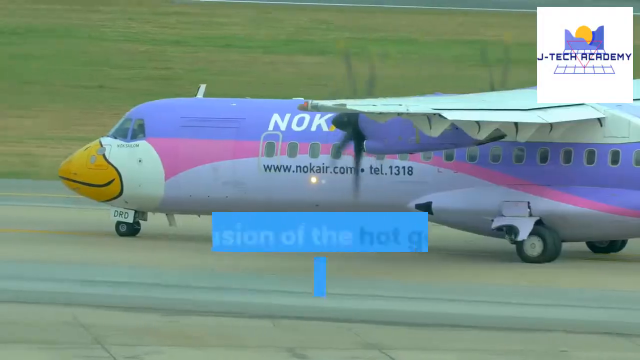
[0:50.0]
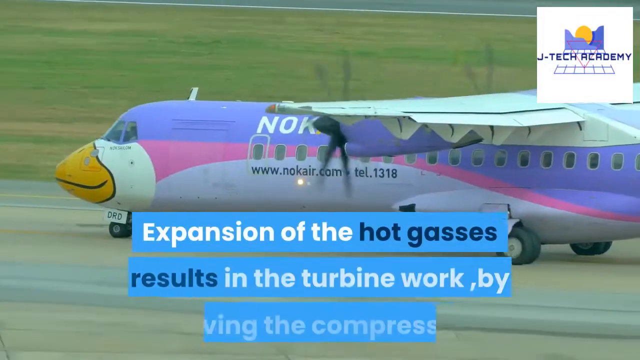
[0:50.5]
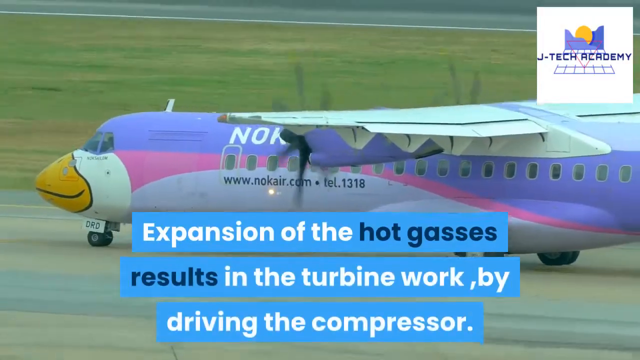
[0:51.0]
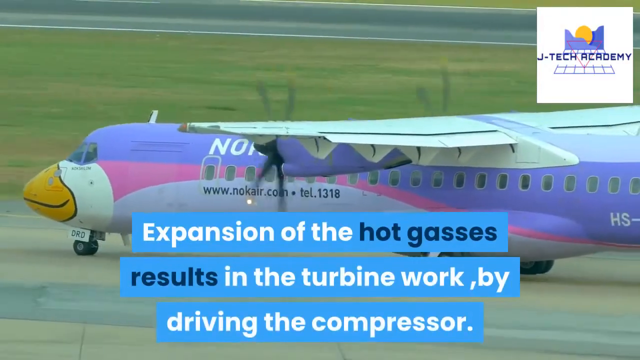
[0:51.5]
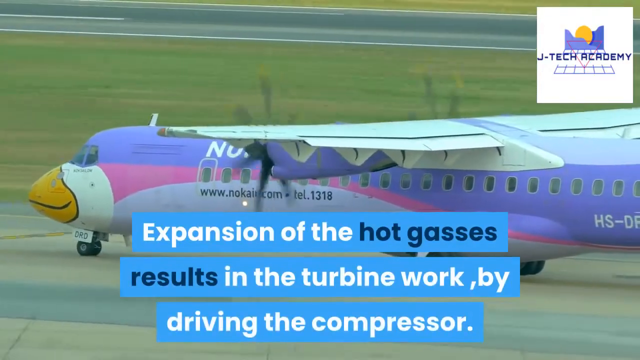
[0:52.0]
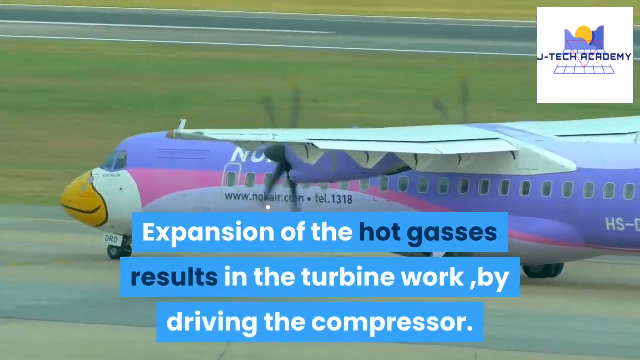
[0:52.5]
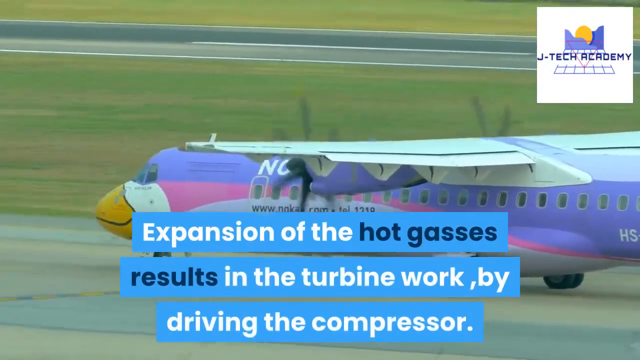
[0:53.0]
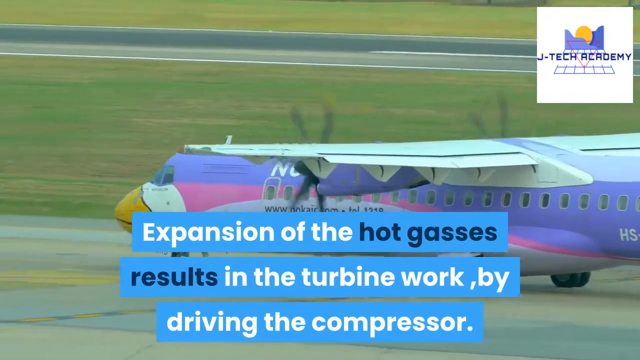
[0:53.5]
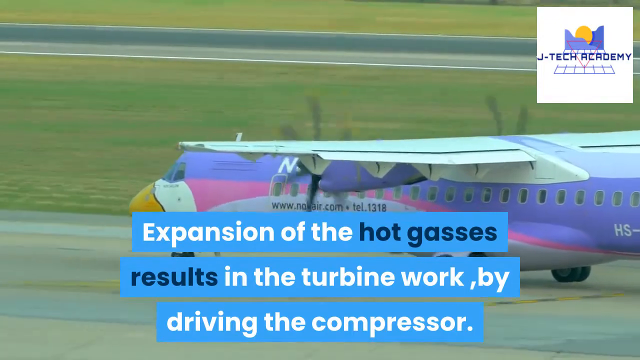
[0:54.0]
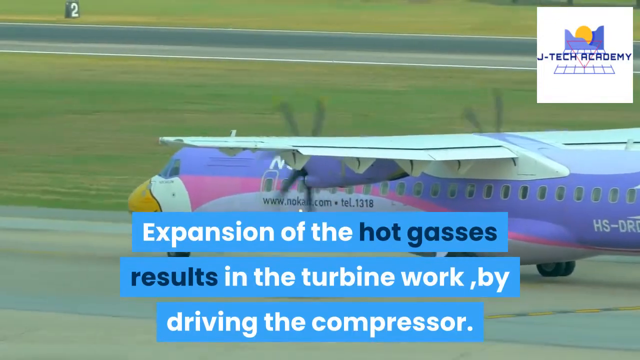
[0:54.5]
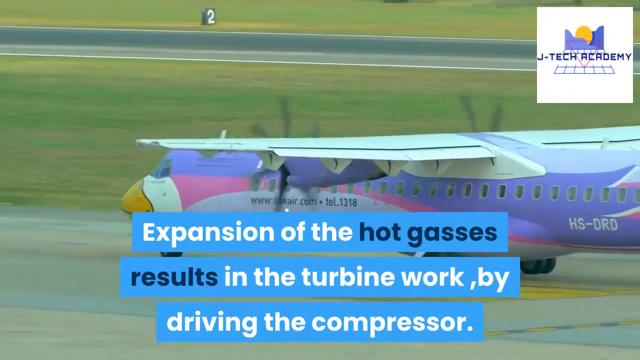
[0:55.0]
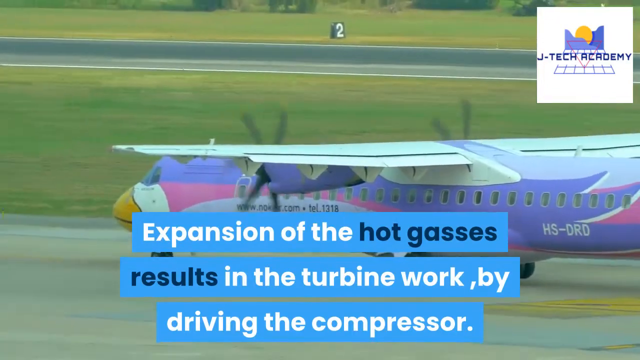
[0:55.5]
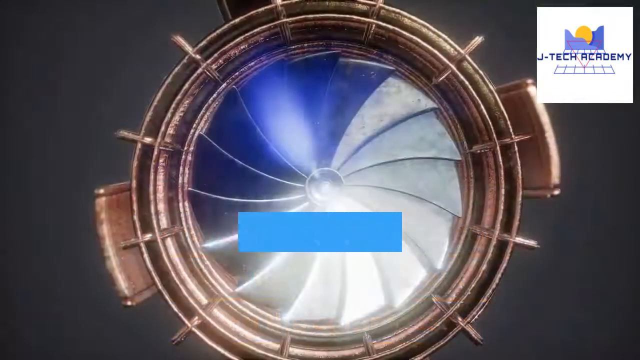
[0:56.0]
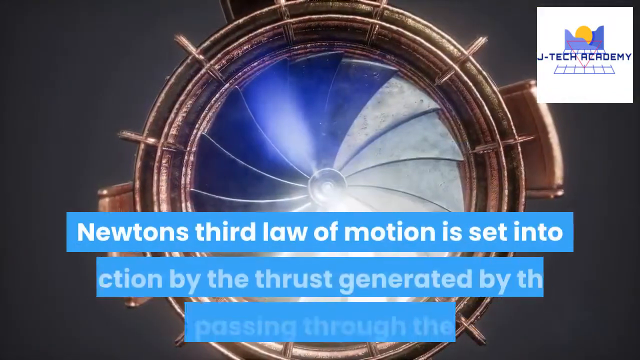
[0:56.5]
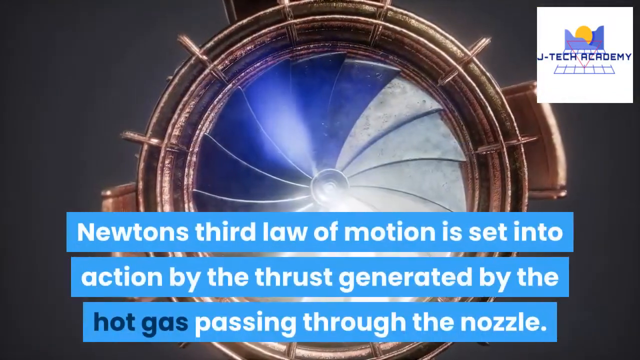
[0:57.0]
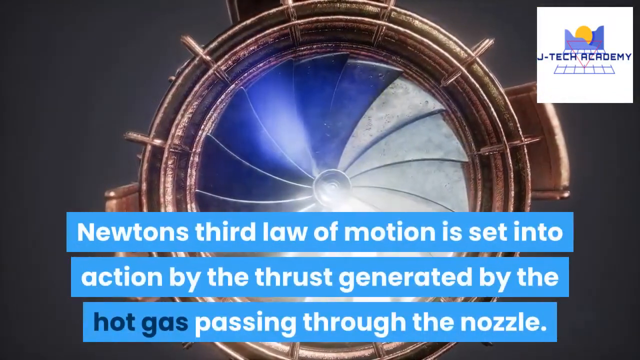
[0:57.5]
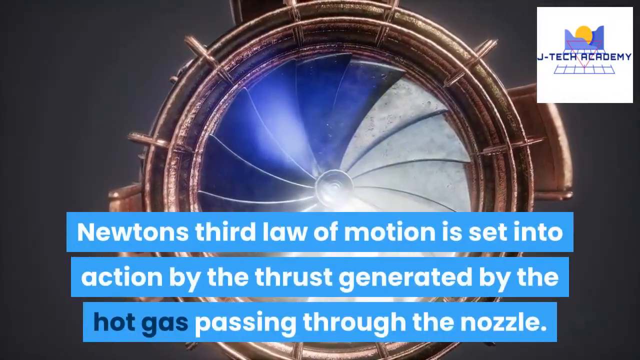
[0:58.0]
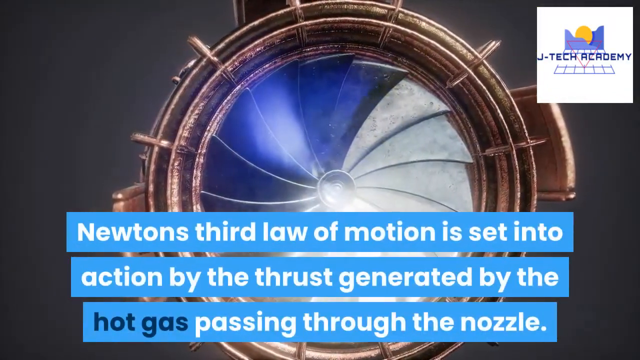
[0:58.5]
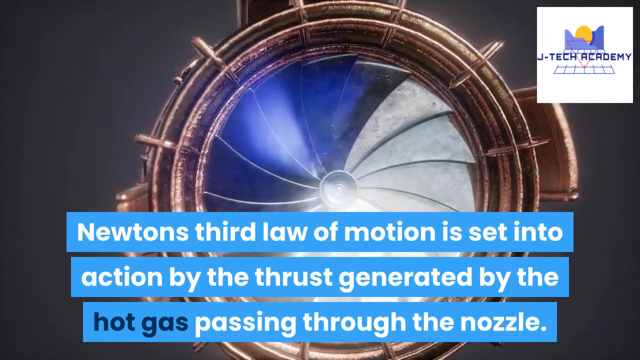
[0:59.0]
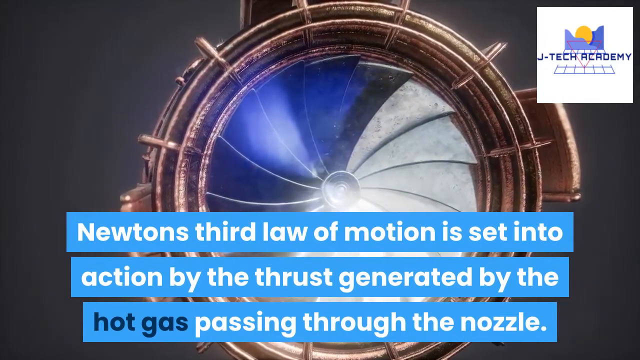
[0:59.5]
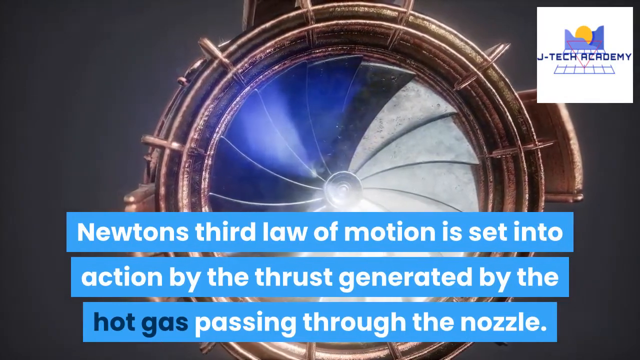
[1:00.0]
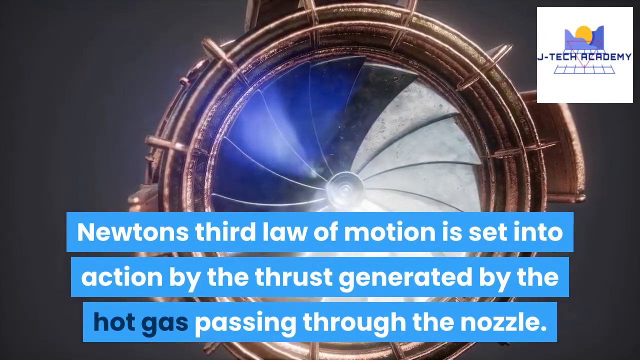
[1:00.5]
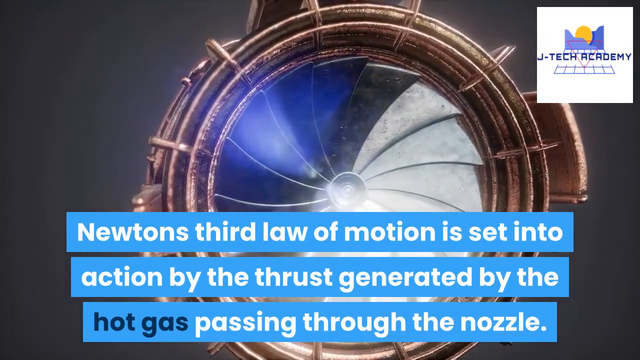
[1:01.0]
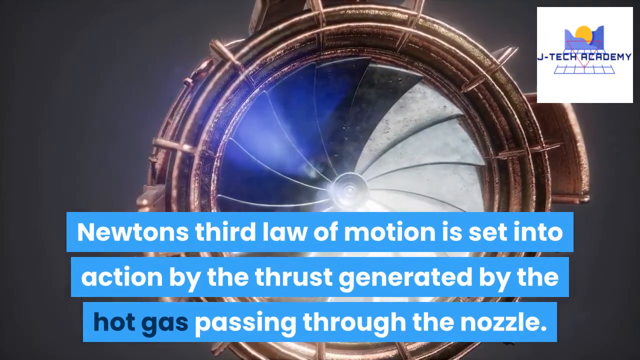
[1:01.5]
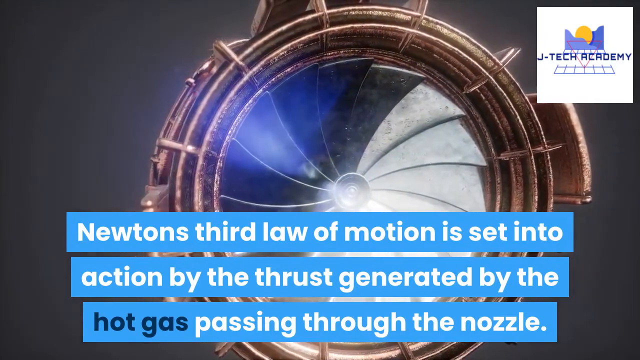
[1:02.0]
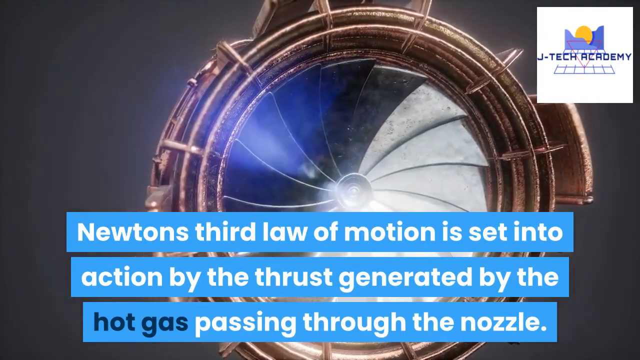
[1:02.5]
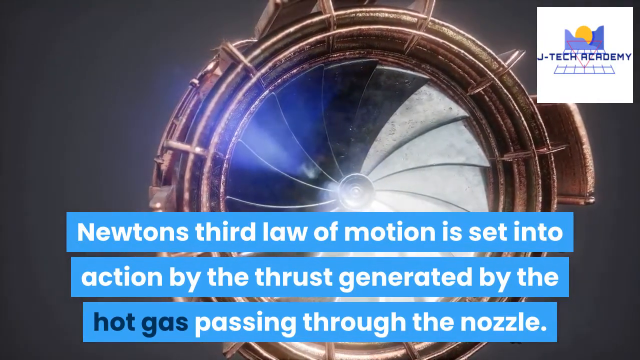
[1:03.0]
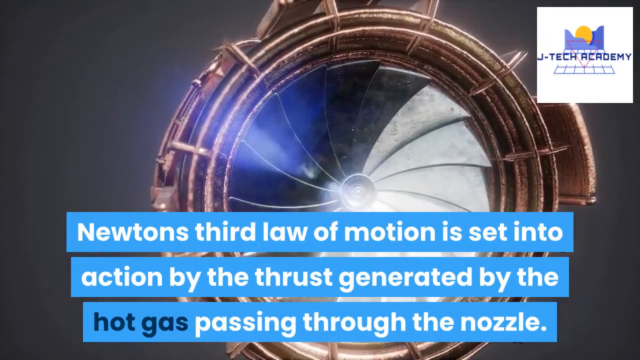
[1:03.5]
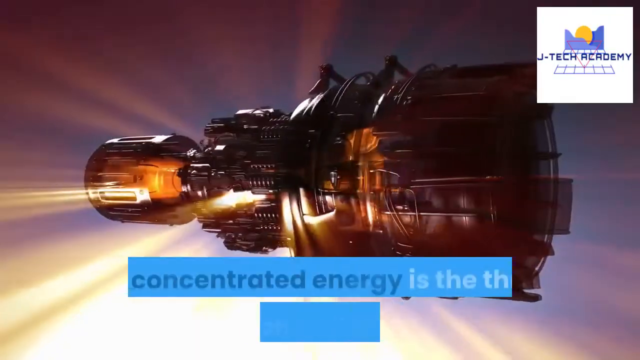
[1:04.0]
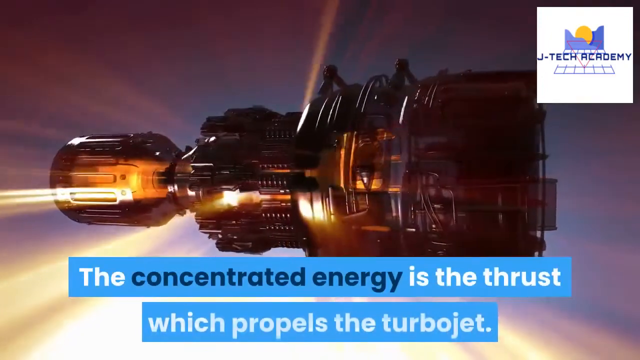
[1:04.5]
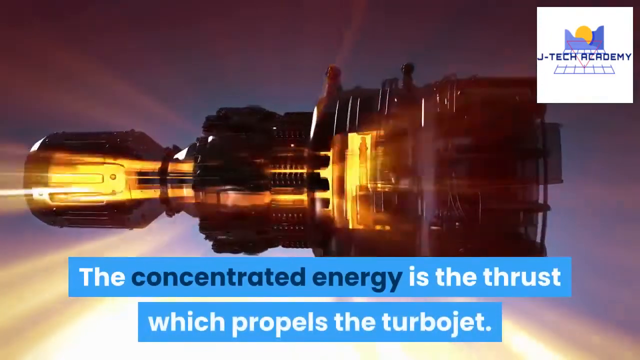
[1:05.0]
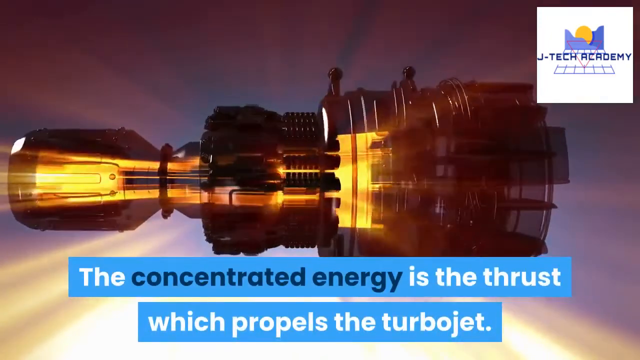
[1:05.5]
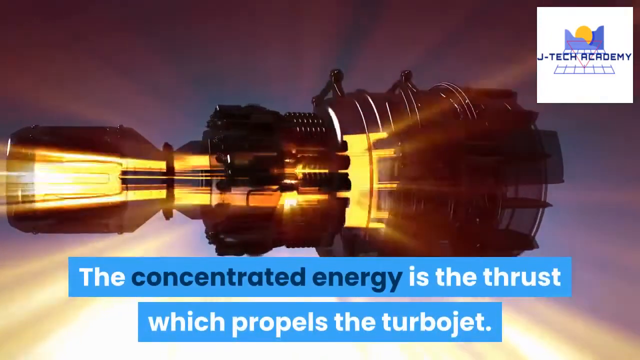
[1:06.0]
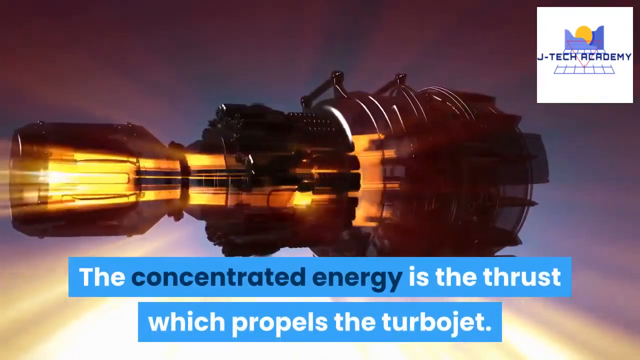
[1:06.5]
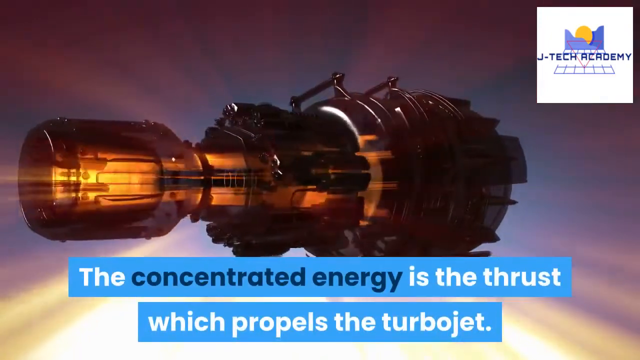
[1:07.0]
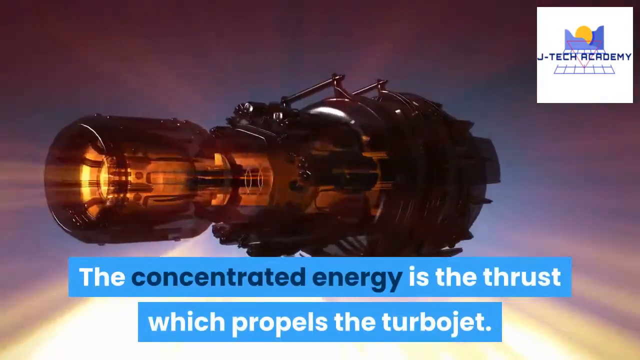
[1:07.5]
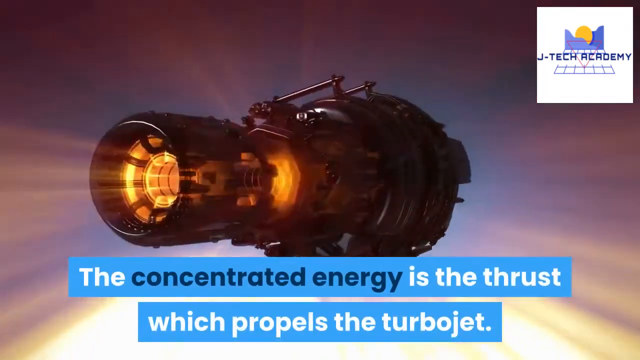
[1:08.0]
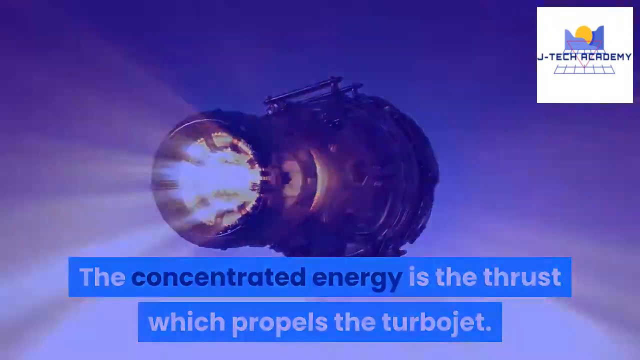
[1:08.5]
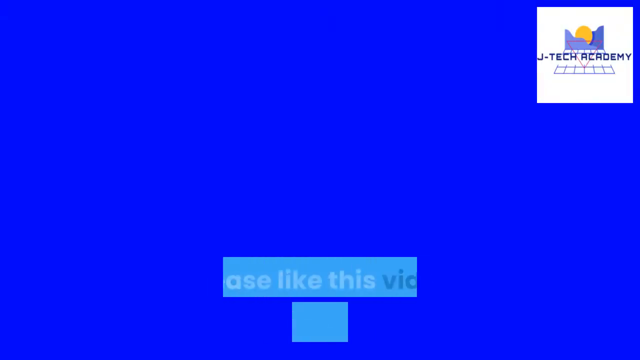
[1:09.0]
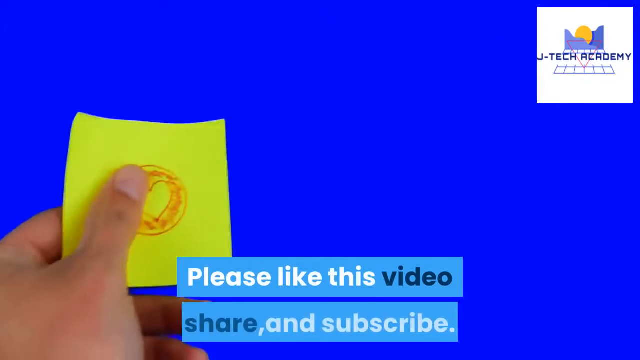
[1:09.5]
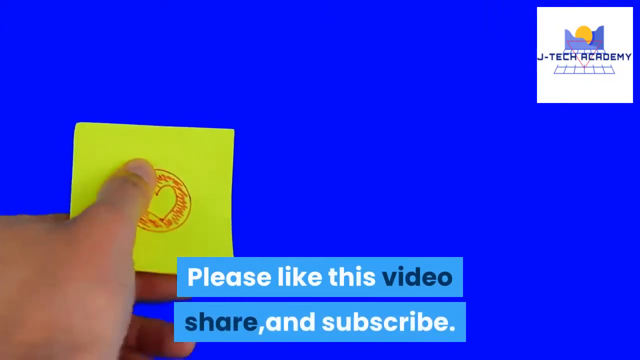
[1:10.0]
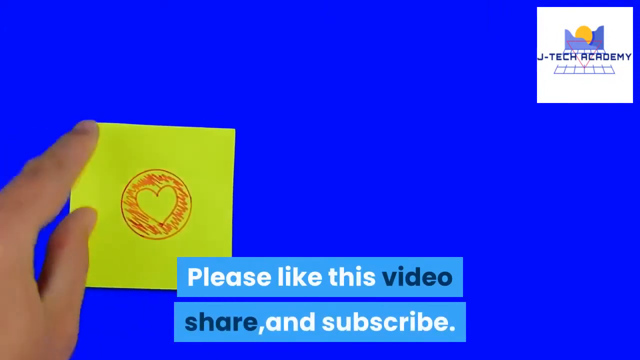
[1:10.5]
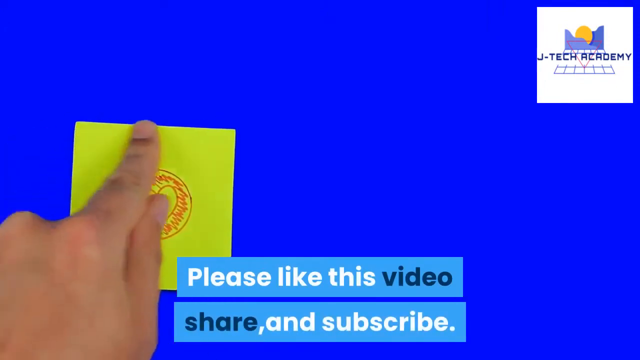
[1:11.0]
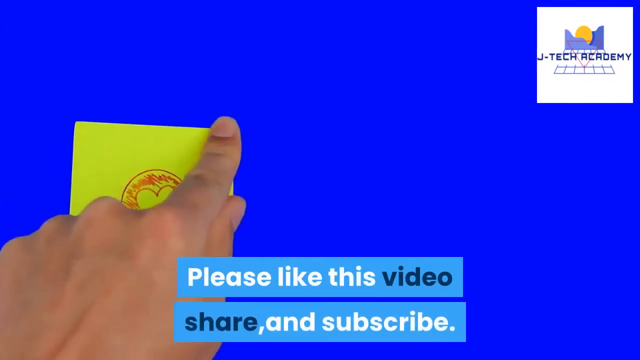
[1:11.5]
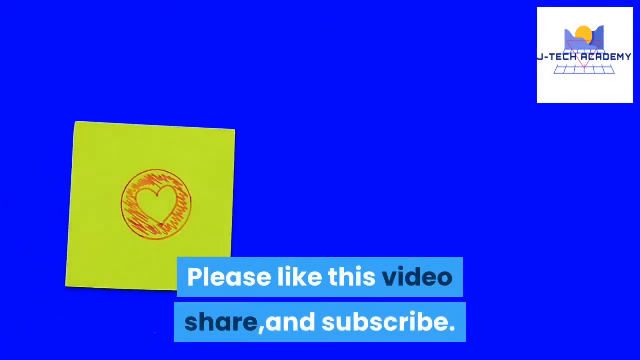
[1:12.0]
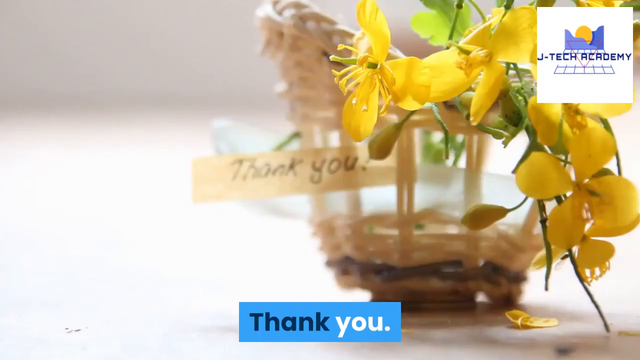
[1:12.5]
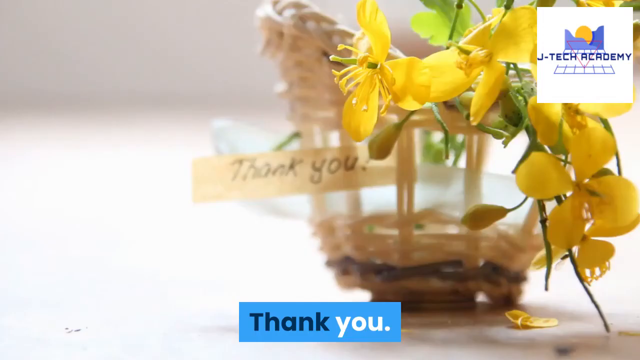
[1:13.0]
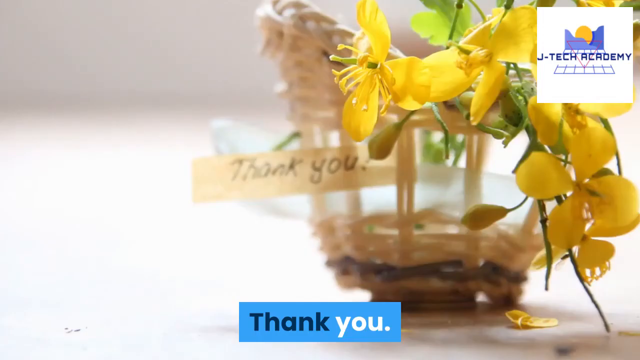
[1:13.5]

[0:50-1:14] A quite small plane is on a runway, painted in light purple, lilac and pink. The airline is Knock Air, with the website "www.knockair.com" on the side, and on the front of the nose there is what looks like a duck beak painted. The plane coasts along the runway with its engine fans going. The video then goes back to animated pictures of engines, with text reading "Newton's third law of motion is set into action by the thrust generated by power." A logo in the top right of the screen reads "J-Tech Academy." The video closes with a human hand popping a yellow post-it note with a red heart onto the screen.